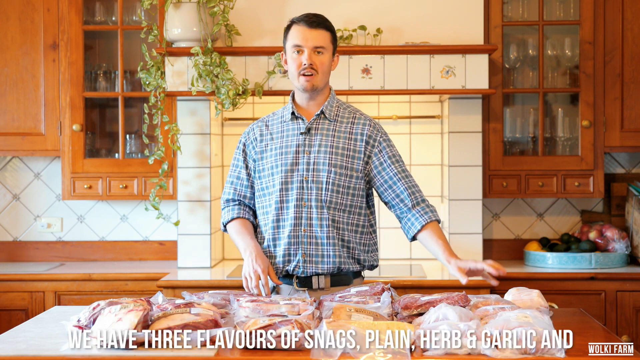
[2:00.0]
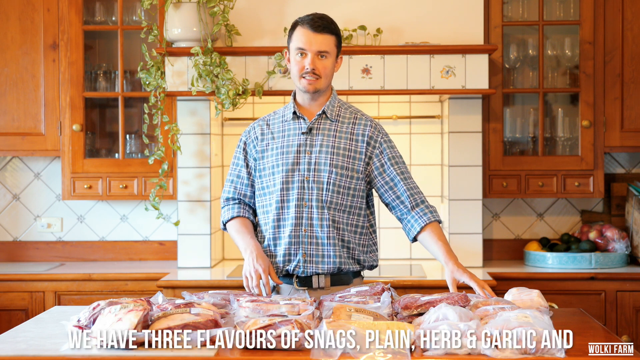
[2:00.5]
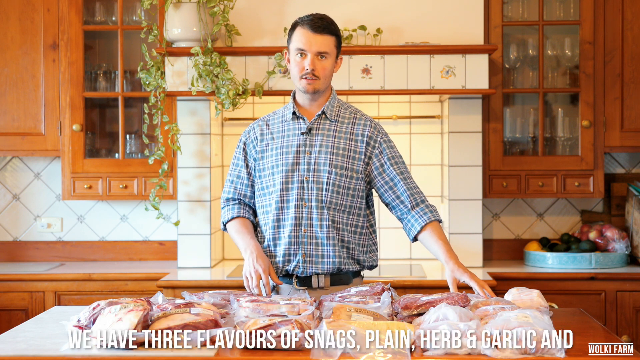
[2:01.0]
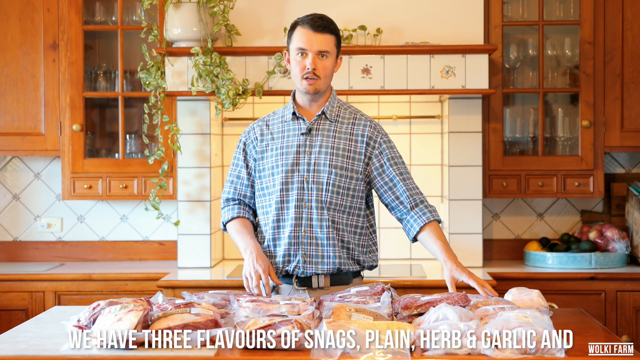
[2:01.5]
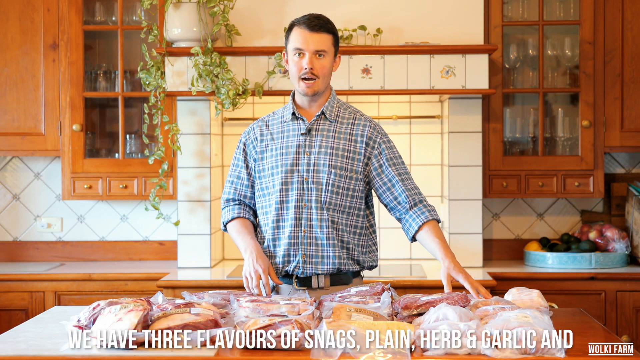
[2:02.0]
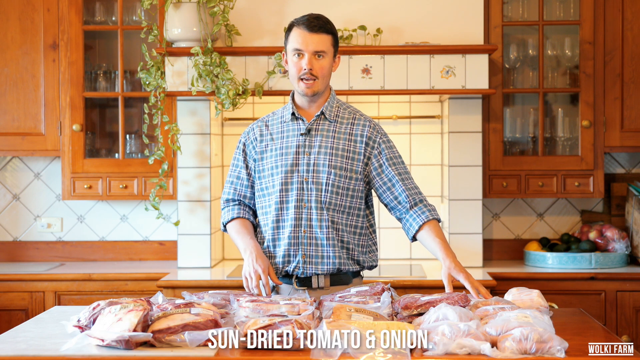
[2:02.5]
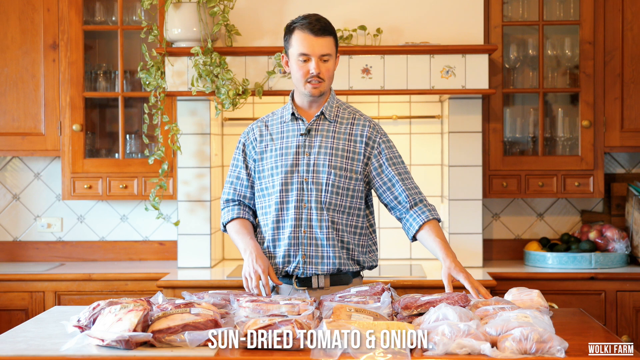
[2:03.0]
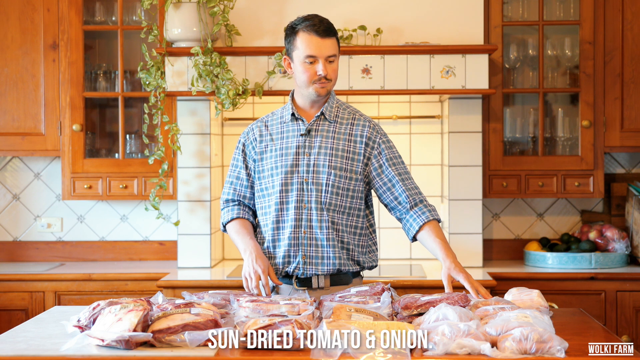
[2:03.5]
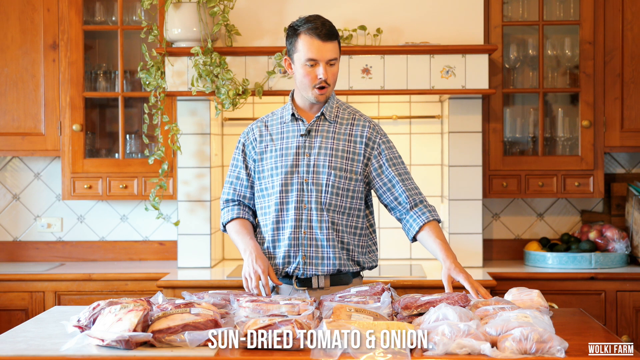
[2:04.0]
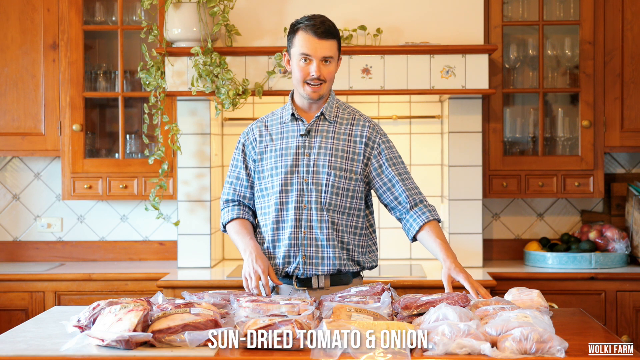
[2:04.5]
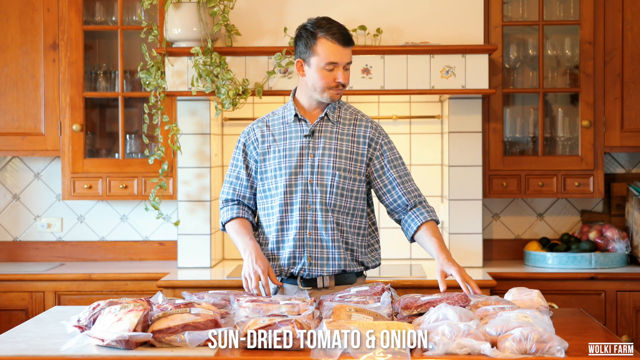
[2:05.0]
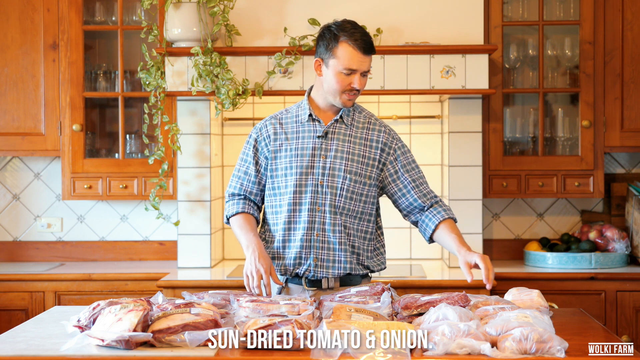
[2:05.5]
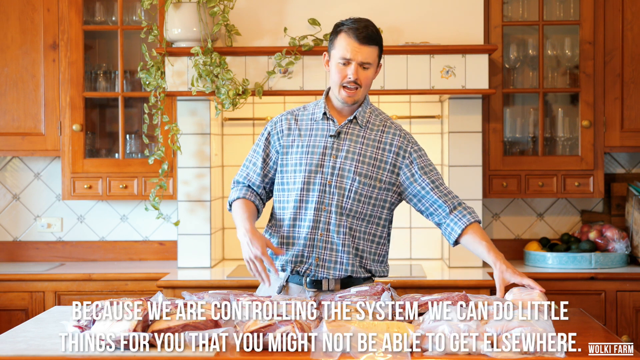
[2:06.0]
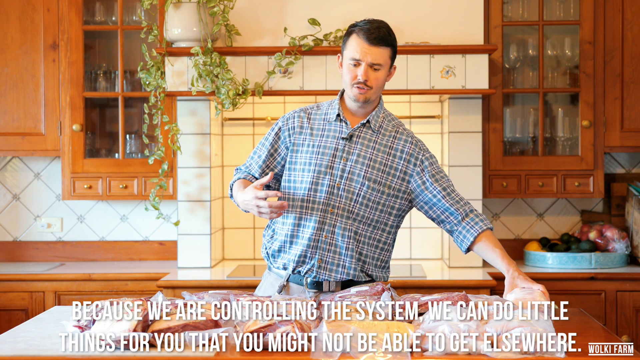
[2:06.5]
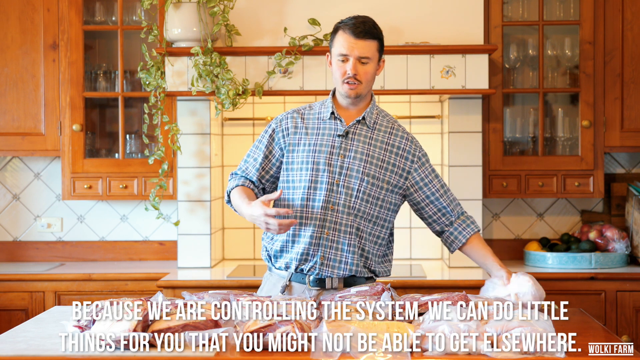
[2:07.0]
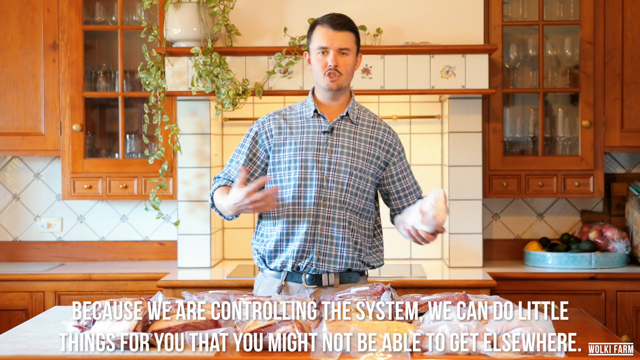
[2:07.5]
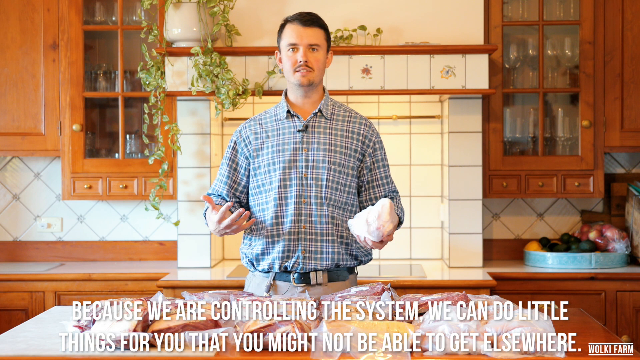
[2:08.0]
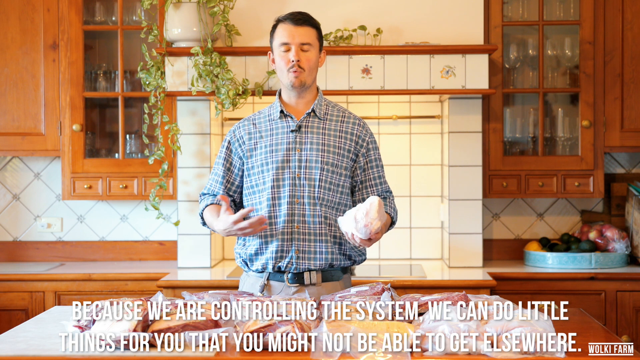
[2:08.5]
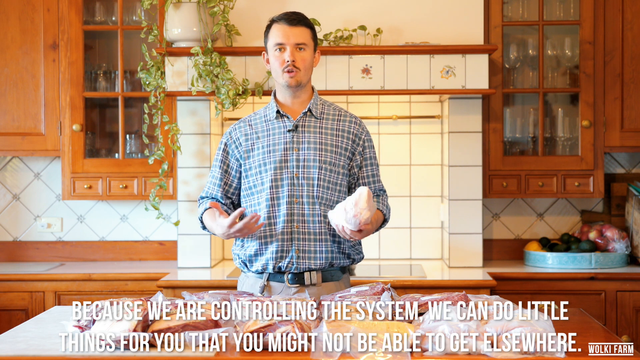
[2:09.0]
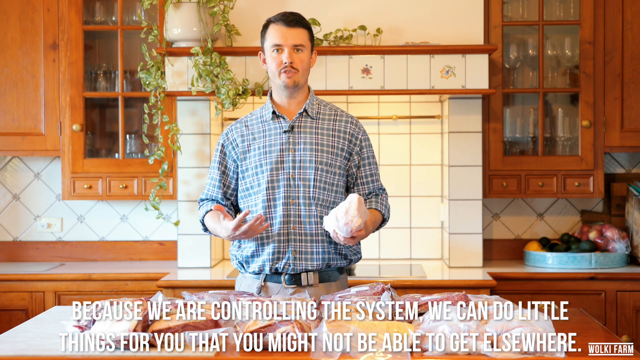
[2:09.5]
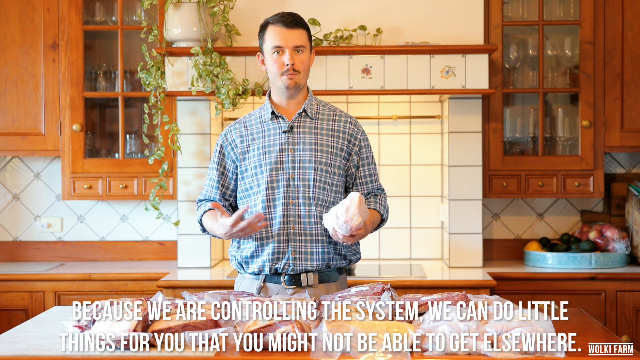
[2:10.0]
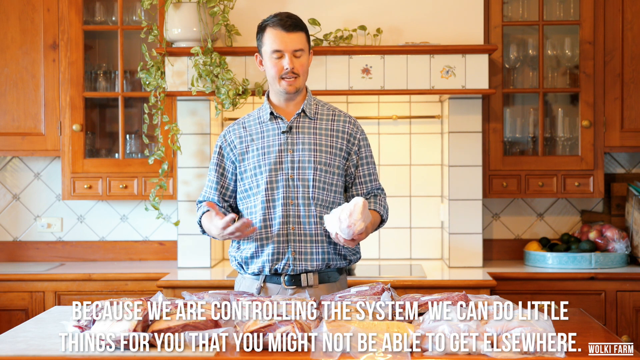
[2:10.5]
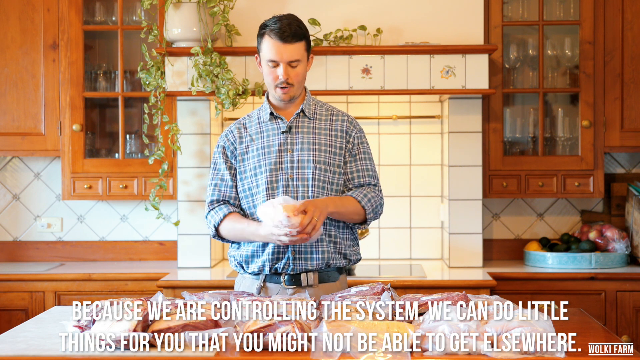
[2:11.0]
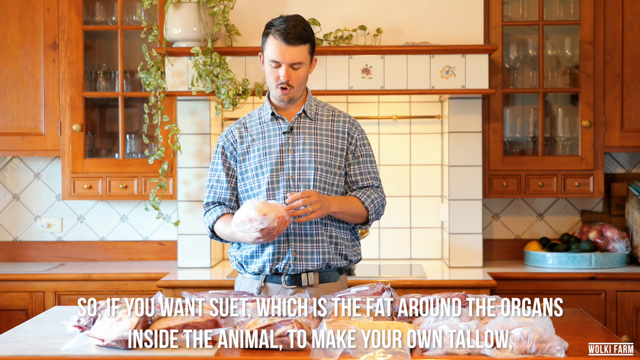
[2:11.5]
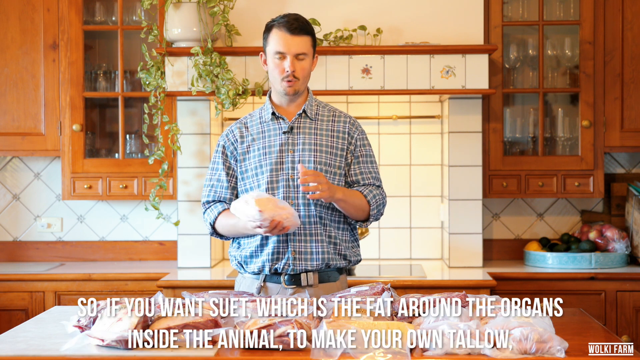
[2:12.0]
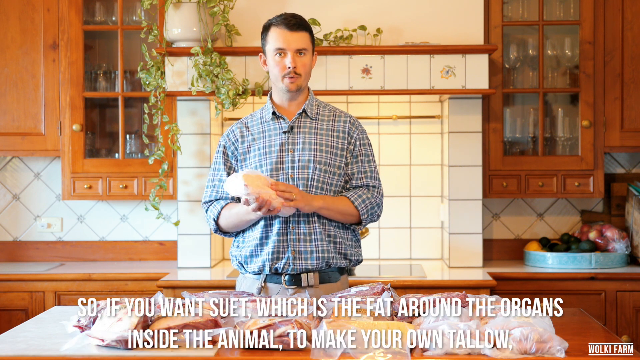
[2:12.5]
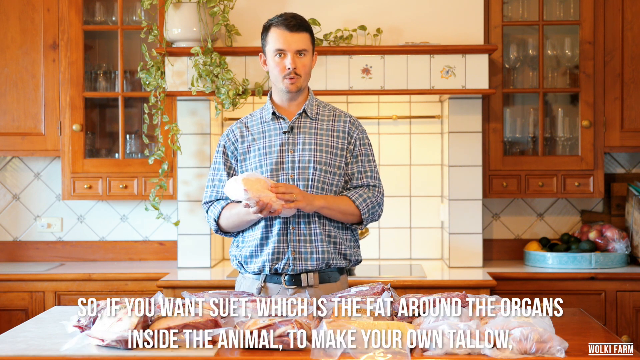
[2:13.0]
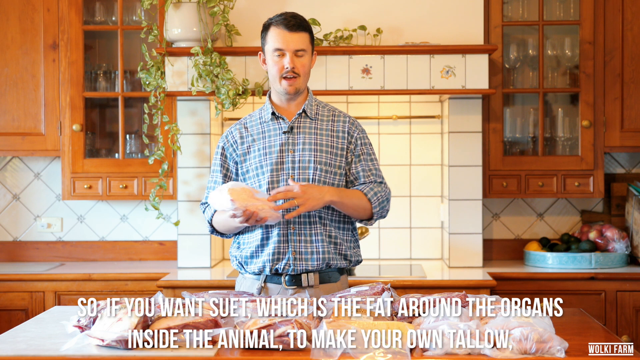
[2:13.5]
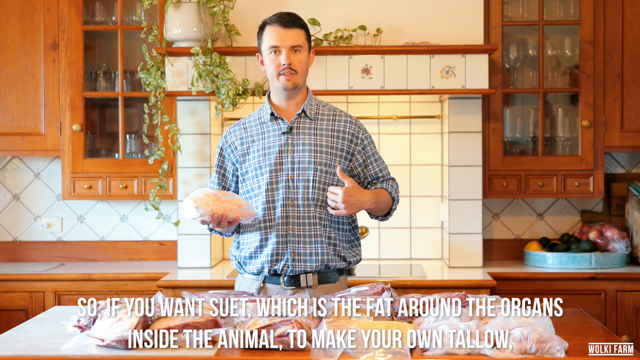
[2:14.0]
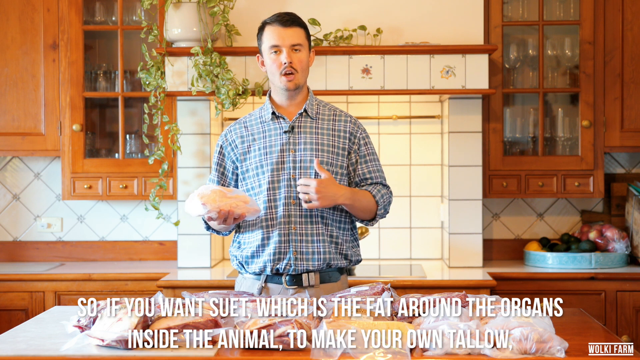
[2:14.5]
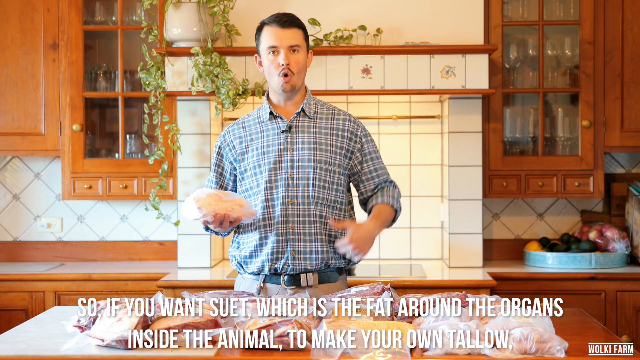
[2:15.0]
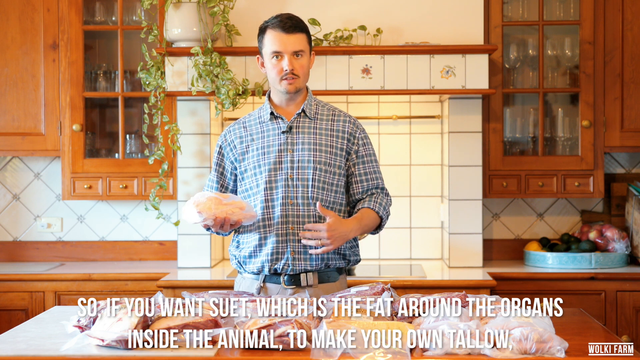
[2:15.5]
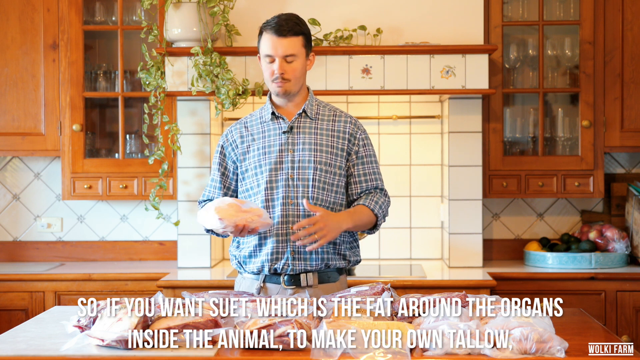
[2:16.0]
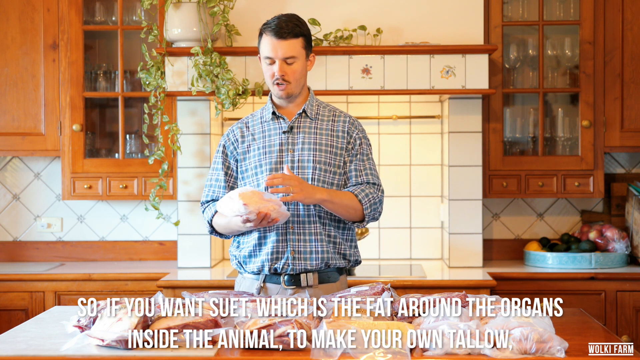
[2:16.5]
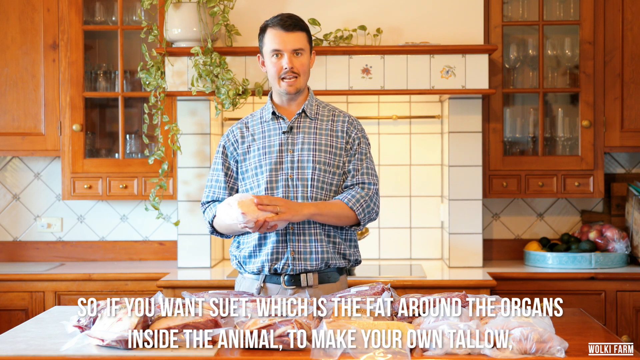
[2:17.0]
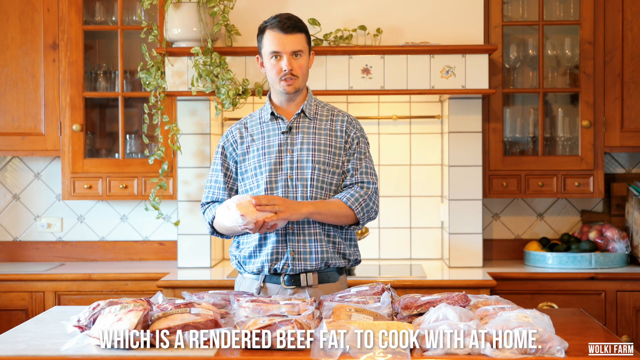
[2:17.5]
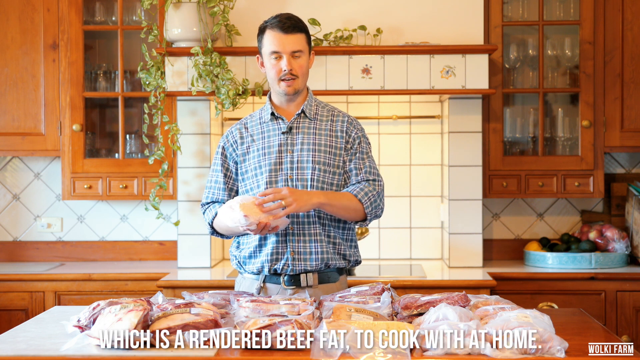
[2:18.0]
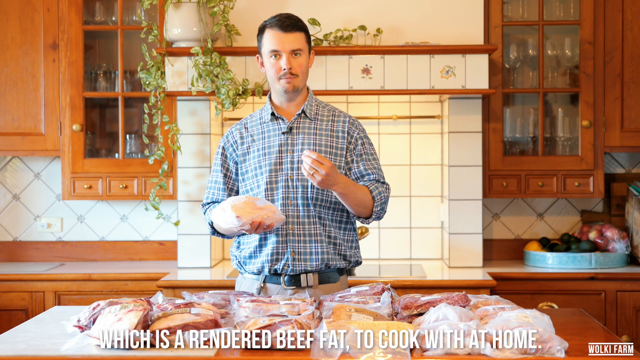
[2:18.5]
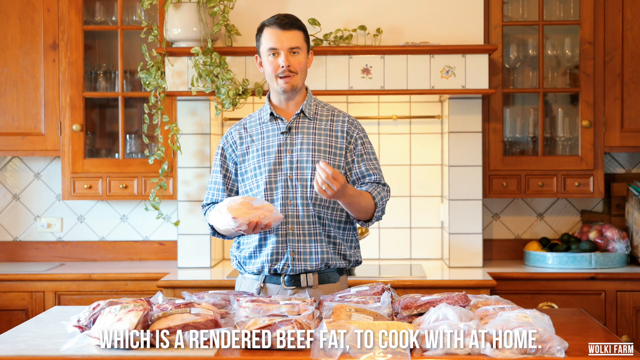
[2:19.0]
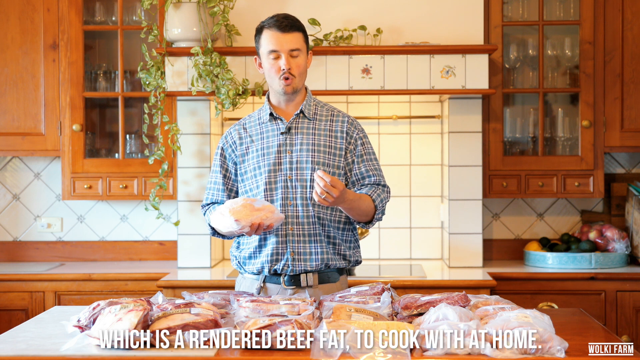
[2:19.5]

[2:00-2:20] The caption reads "We have three flavours of snags, plain herb and garlic, and sun-dried tomato and onion." Meanwhile Jacob pats a package of something in a more opaque bag. The captions then read "because we're controlling the system we can do little things for you that you might not be able to get elsewhere so if you want suet which is the fat around the organs inside the animal to make your own tallow which is rendered beef fat to cook with at home". As this appears he holds the bag of sausages, apparently moving it from one hand to the other. There appears to be something in a large black pot on the stove behind him, though he mostly obscures it.